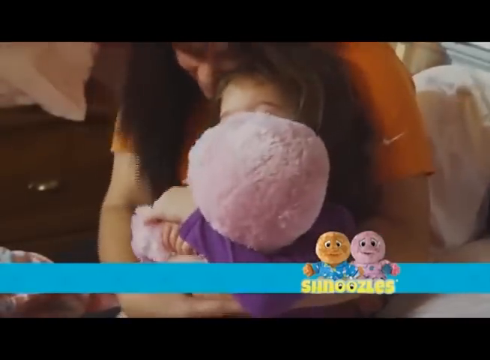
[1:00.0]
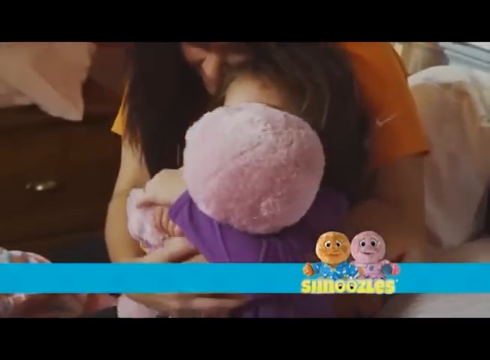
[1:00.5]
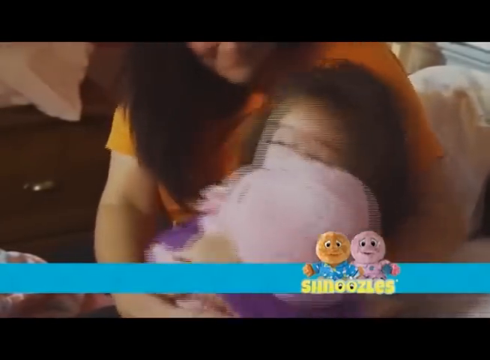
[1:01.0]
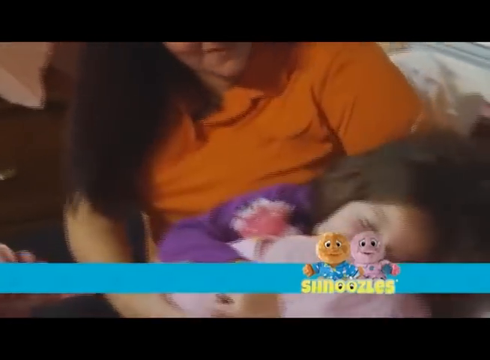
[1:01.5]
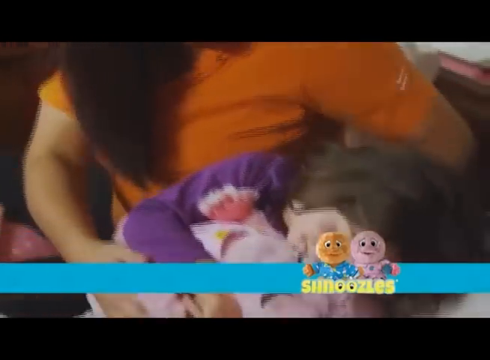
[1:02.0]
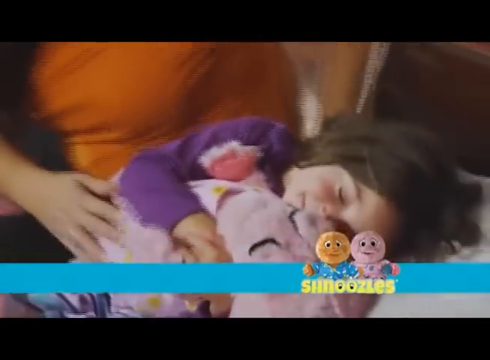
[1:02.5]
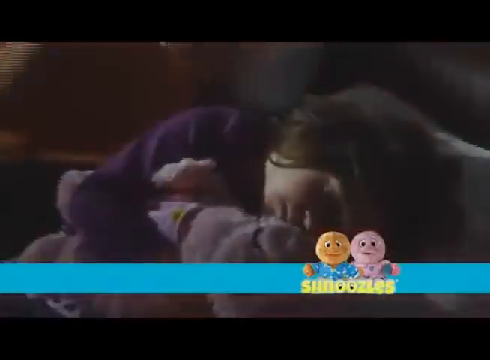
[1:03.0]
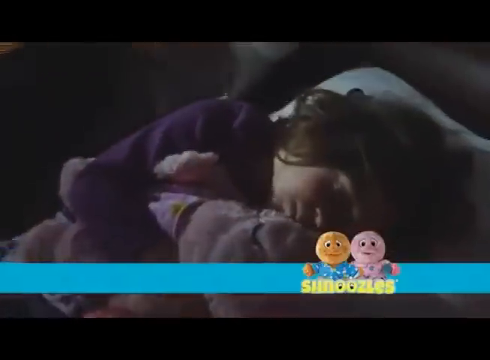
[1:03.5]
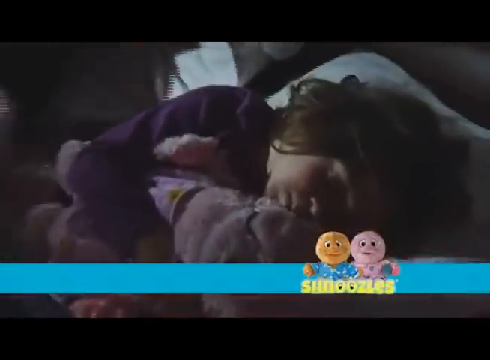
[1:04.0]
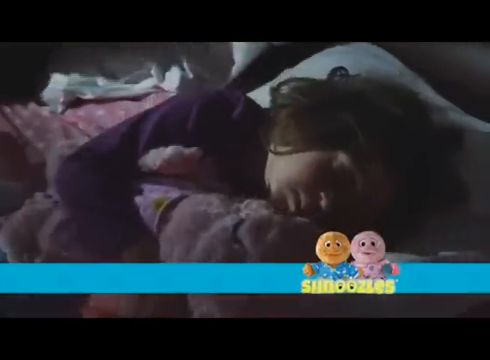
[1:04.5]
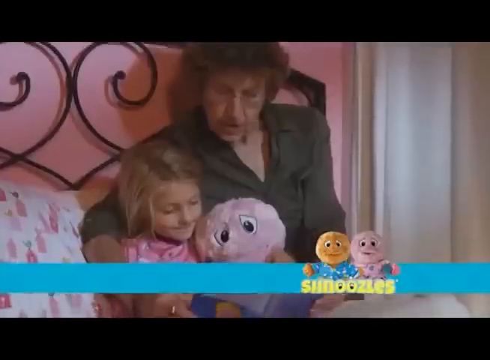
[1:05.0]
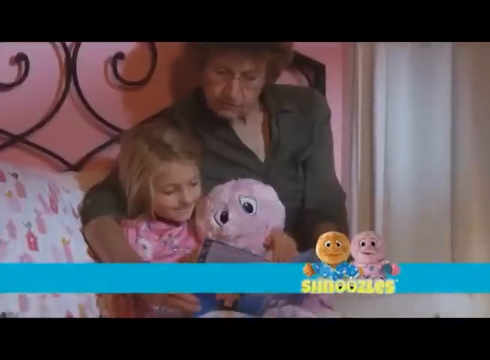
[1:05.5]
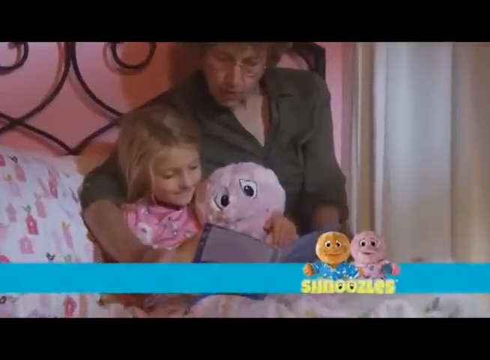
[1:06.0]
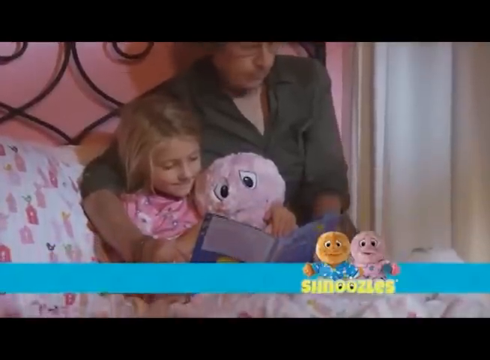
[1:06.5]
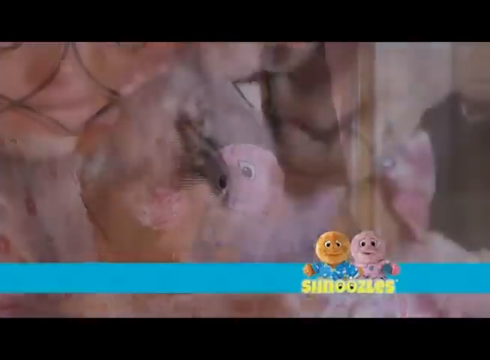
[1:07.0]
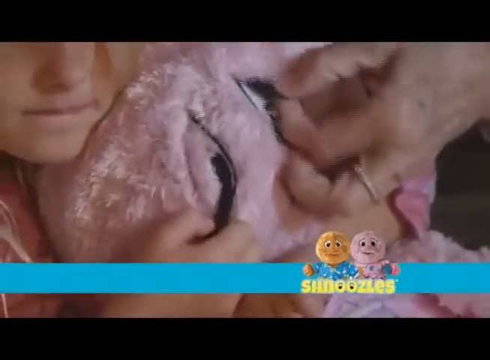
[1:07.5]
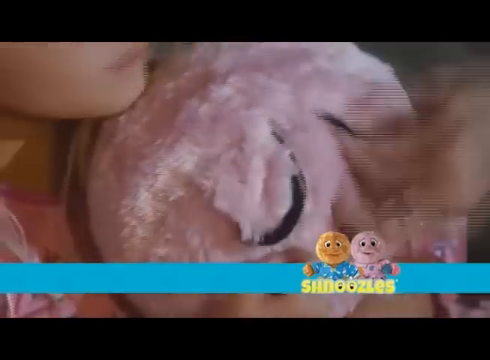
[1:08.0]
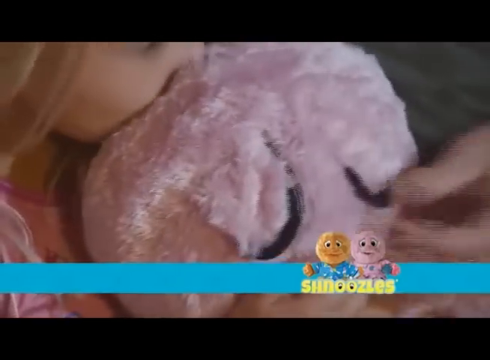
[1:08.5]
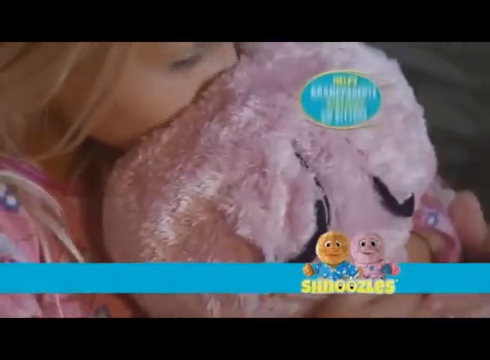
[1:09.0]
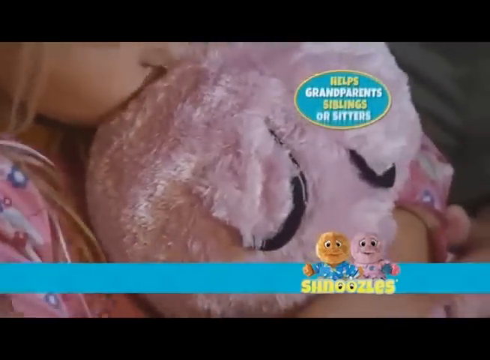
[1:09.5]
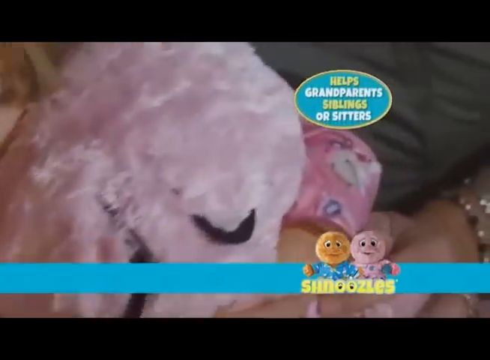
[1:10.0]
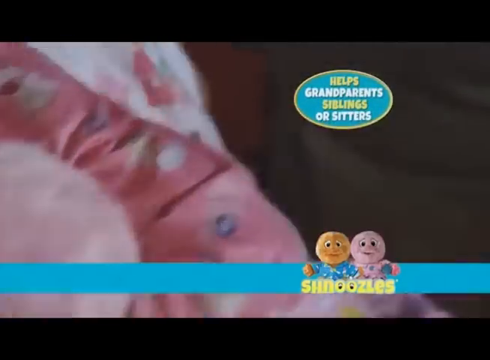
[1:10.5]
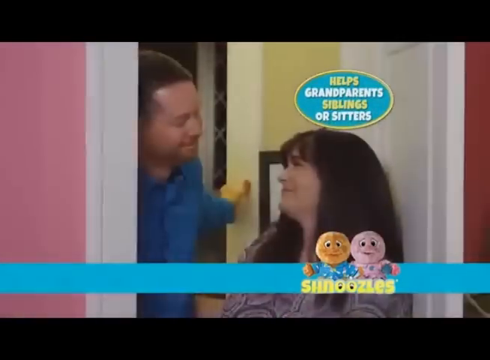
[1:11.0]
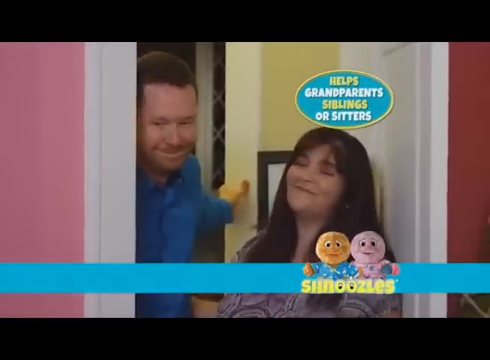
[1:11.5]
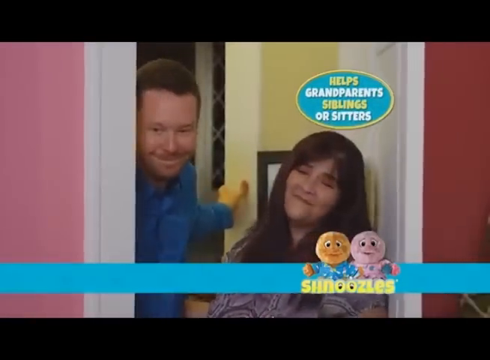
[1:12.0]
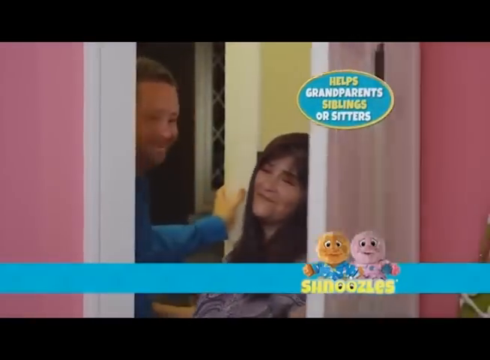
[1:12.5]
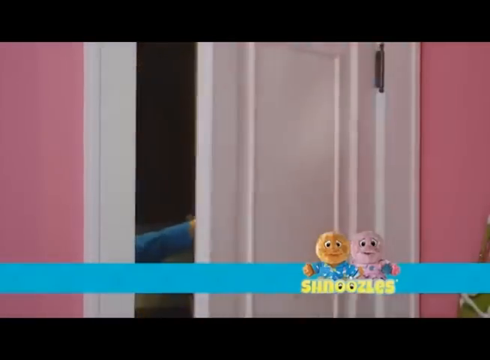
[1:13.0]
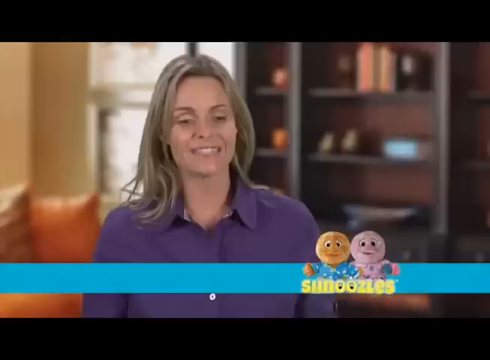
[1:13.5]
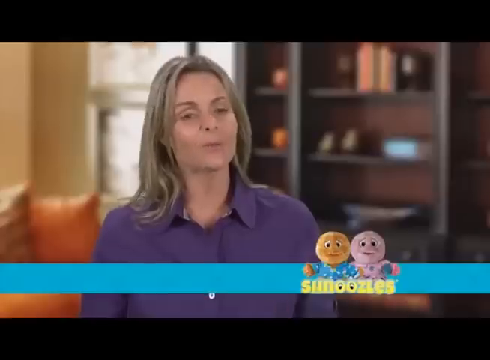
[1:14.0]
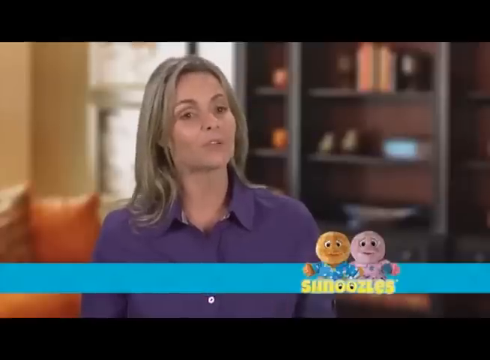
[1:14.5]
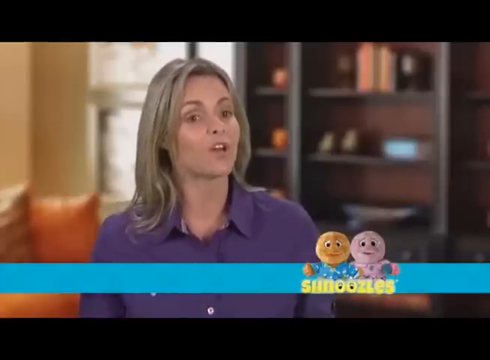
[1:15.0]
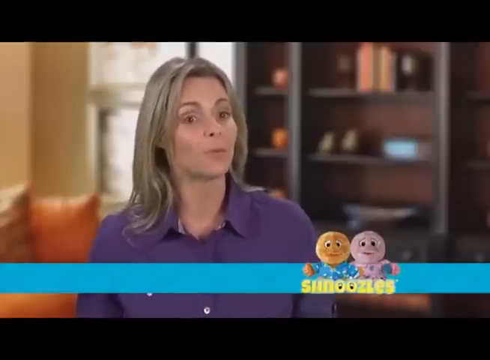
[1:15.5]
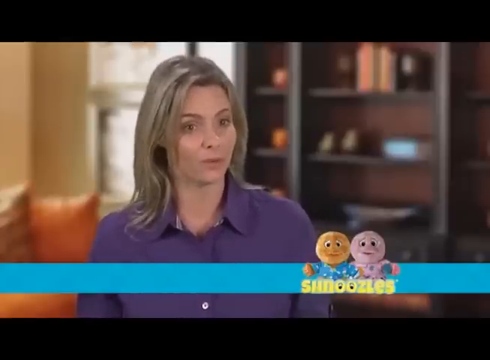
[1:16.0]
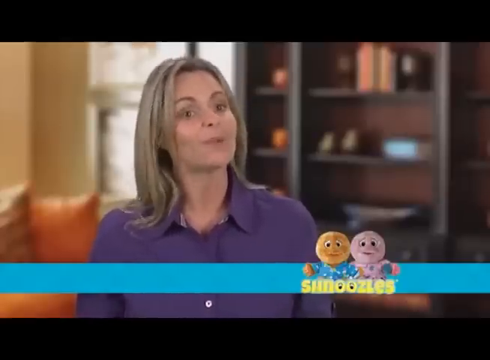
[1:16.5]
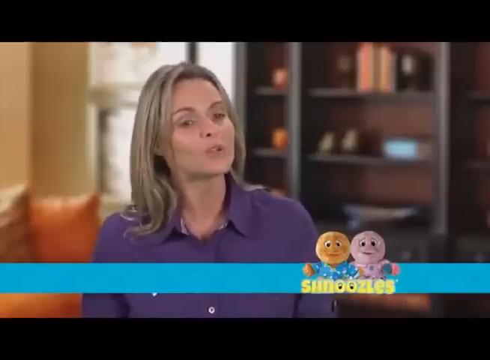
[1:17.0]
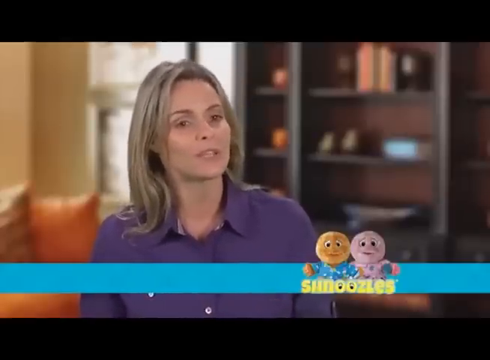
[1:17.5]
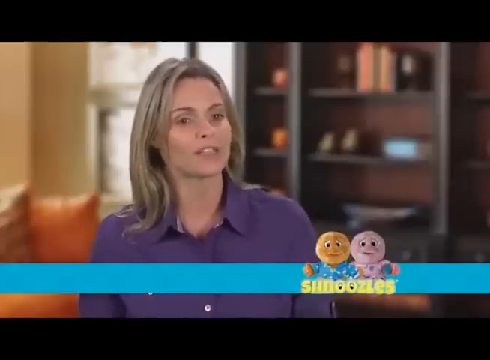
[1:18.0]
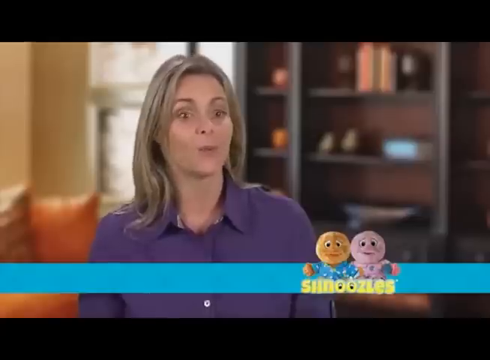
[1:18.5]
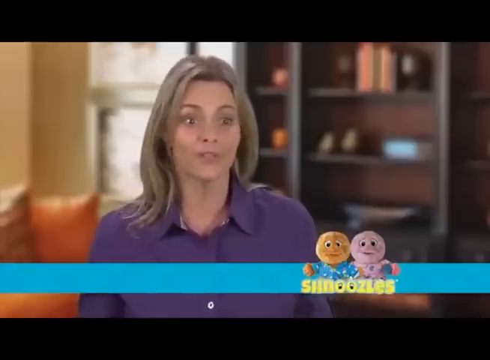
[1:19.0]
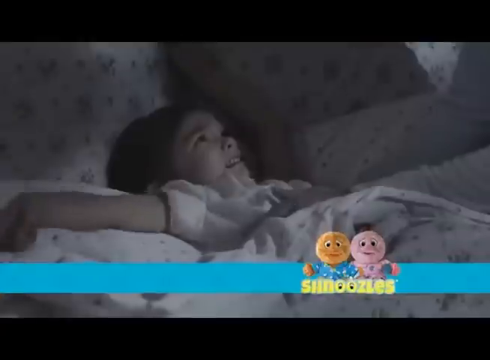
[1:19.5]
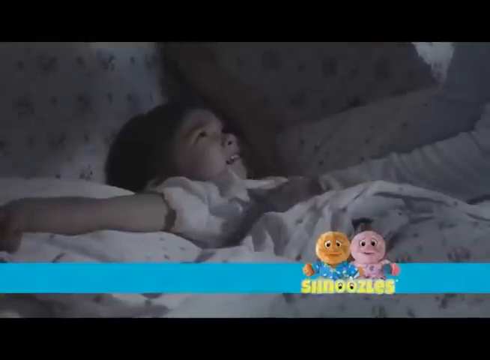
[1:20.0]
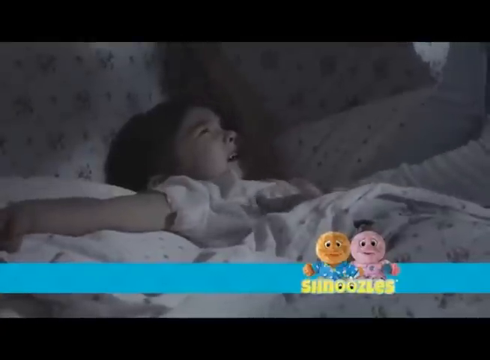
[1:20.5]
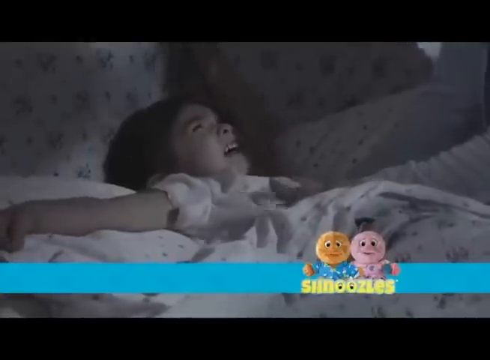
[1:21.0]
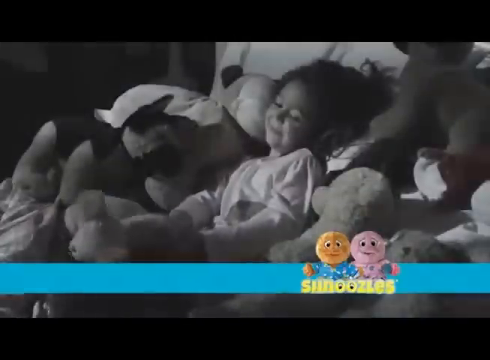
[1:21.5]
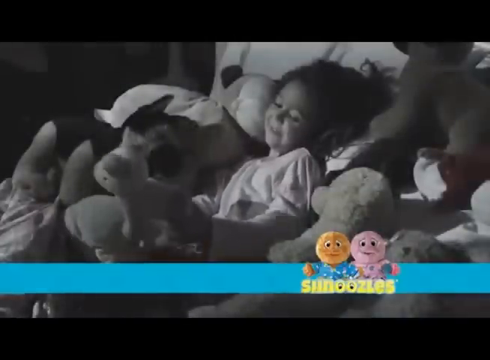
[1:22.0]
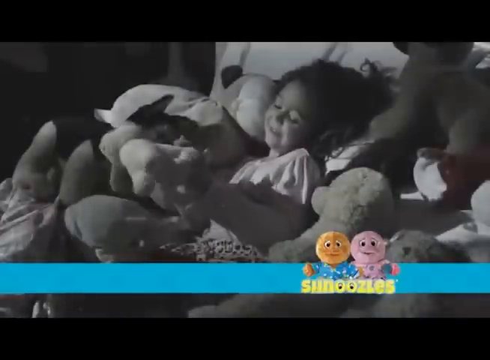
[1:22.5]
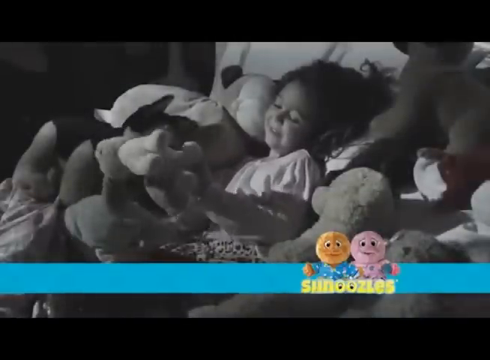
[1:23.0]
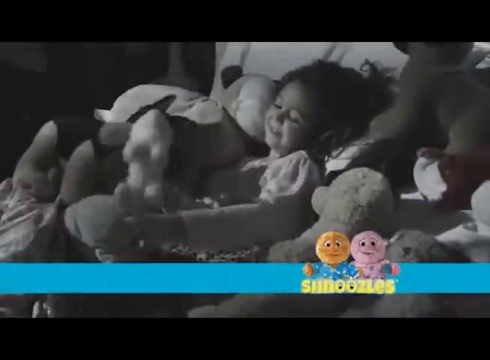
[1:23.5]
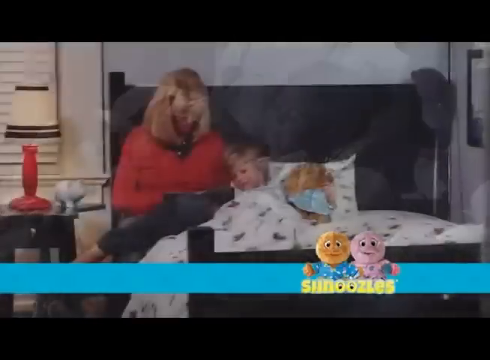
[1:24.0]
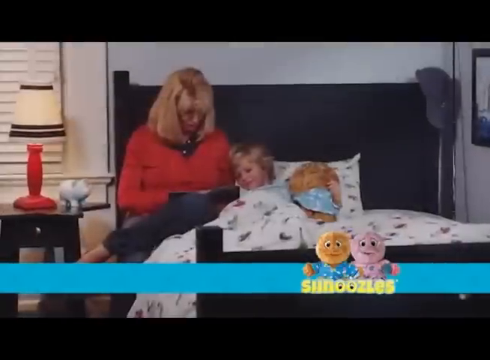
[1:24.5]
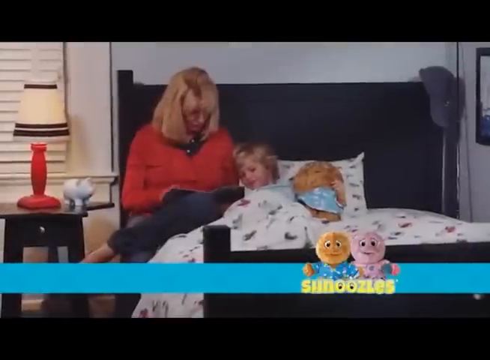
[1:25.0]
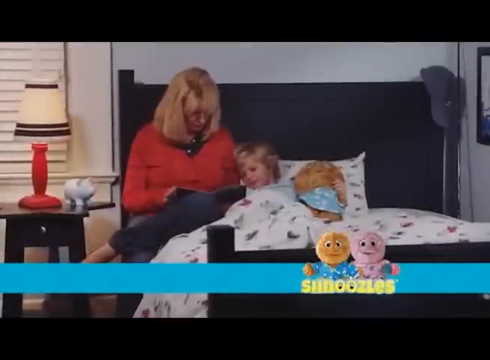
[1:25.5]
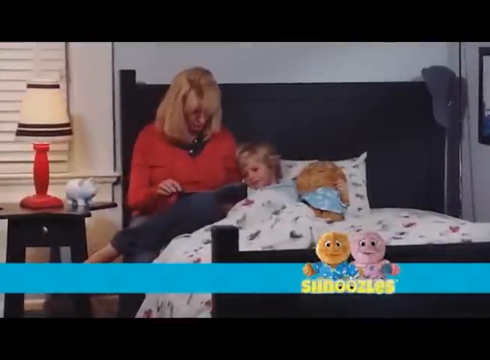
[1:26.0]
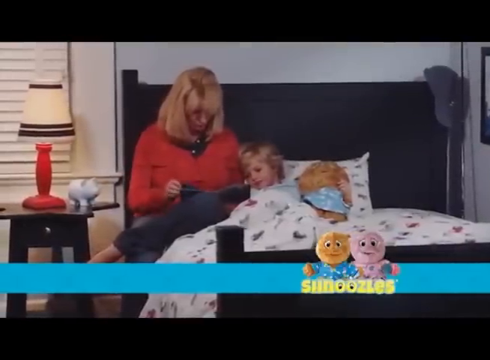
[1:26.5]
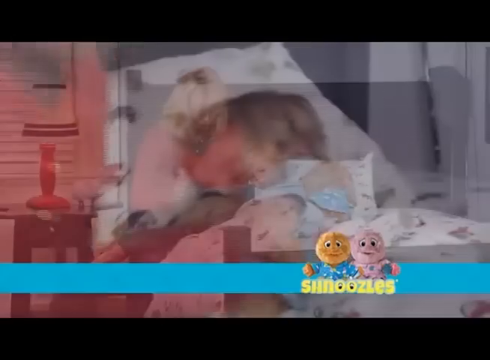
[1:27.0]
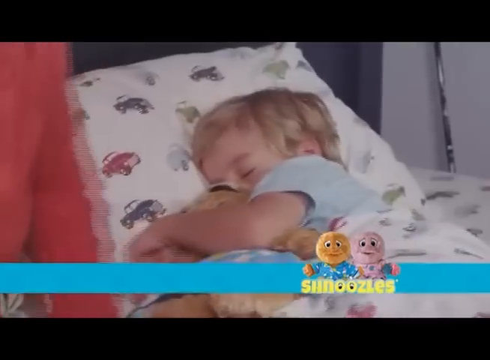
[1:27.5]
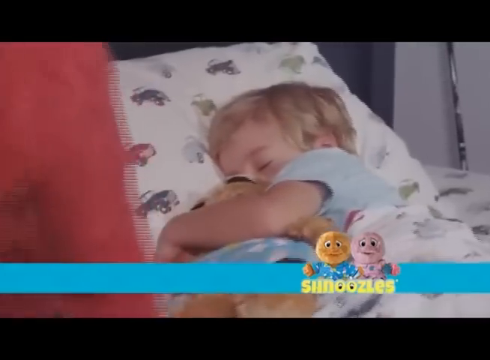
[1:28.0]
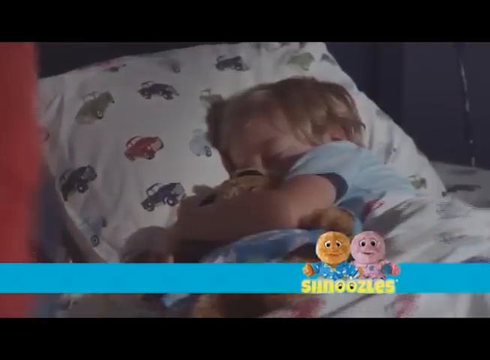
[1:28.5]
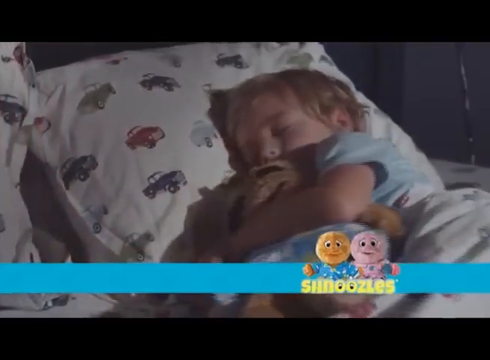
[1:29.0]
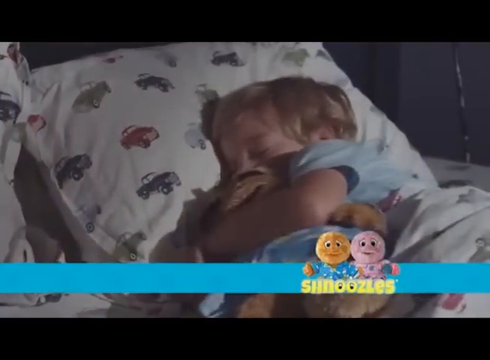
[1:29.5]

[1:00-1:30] A mother holds her child, a little girl, along with a stuffed animal called a chanoozle, and a lady who looks like she might be a grandma holds her grandchild with a chanoozle. A woman in a purple shirt is on the left of the frame, talking. A little girl is shown crying in the dark, probably afraid of the dark, followed by a little boy sleeping easily with his chanoozle. A message pops up in the upper right-hand corner reading "helps grandparents, siblings or sitters". A mom and dad happily shut the bedroom door to a pink bedroom. A mother is shown talking, and then a mother in a red shirt is with a little boy as he drifts off to sleep happily.